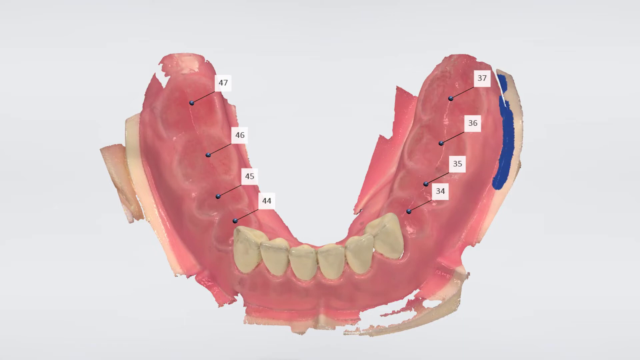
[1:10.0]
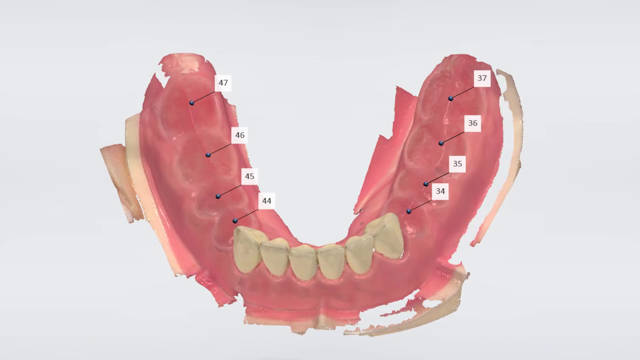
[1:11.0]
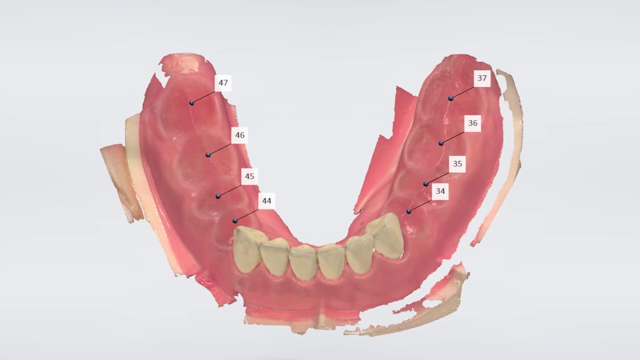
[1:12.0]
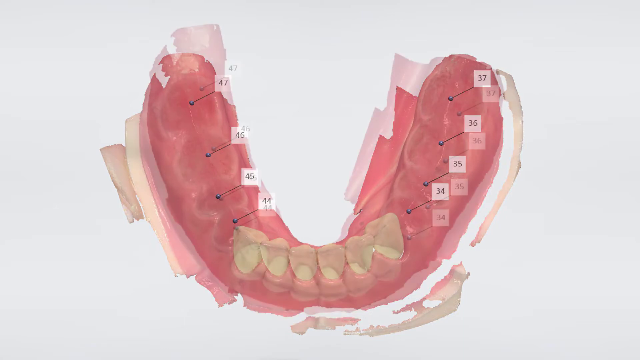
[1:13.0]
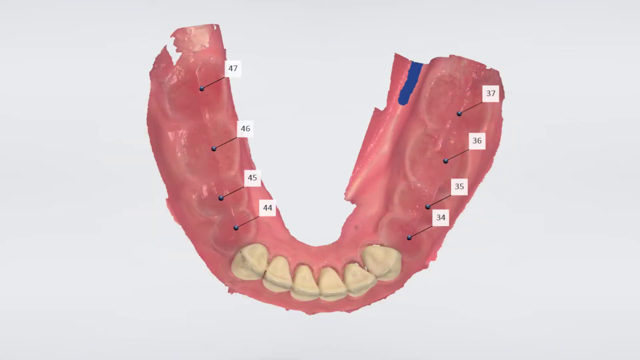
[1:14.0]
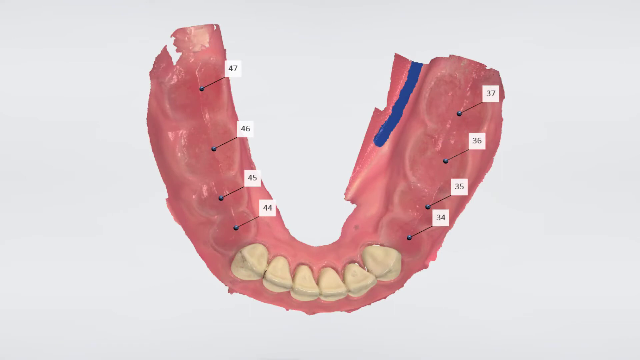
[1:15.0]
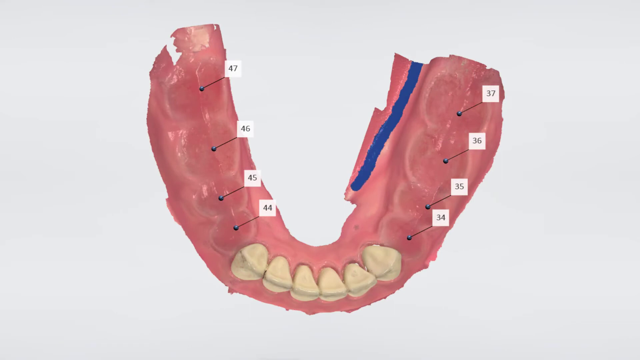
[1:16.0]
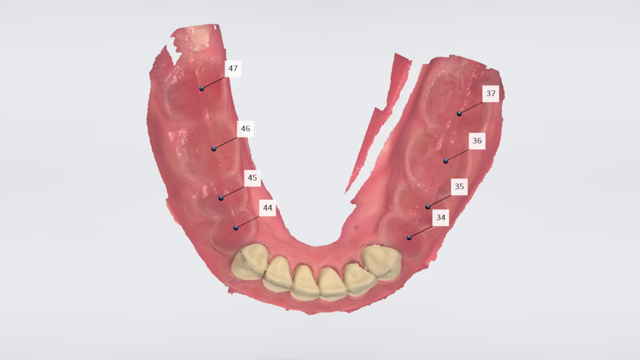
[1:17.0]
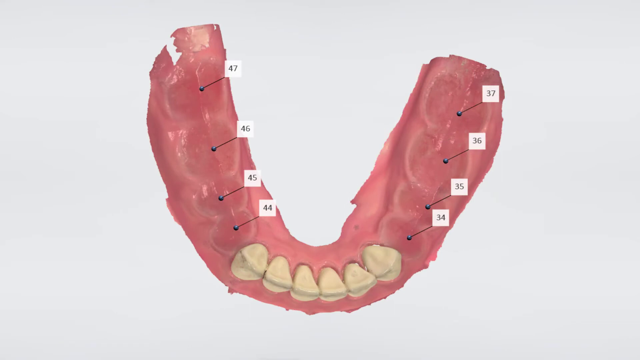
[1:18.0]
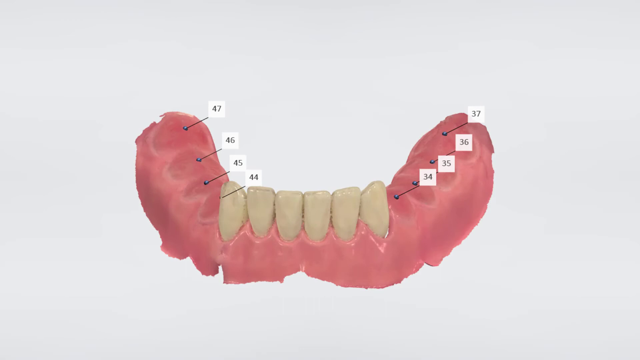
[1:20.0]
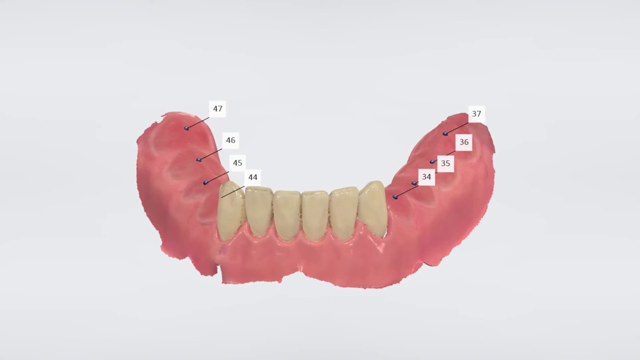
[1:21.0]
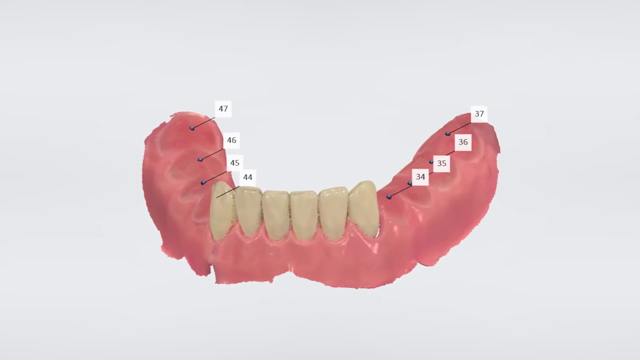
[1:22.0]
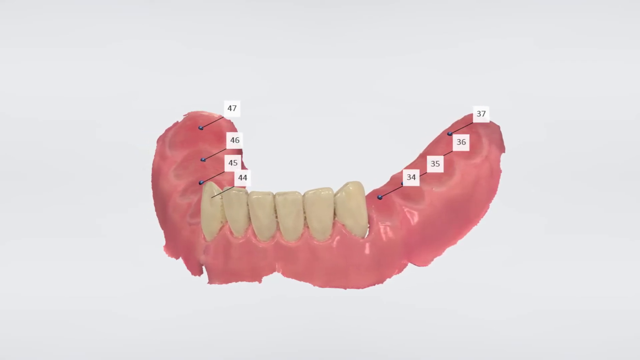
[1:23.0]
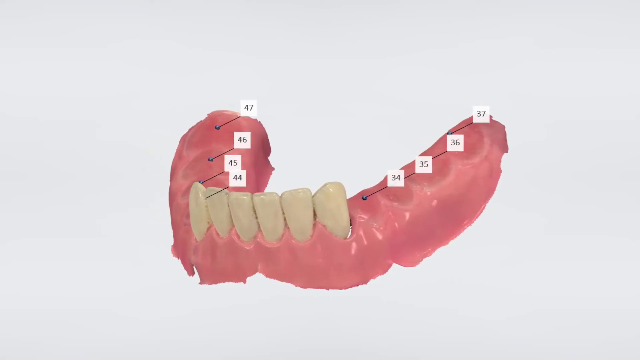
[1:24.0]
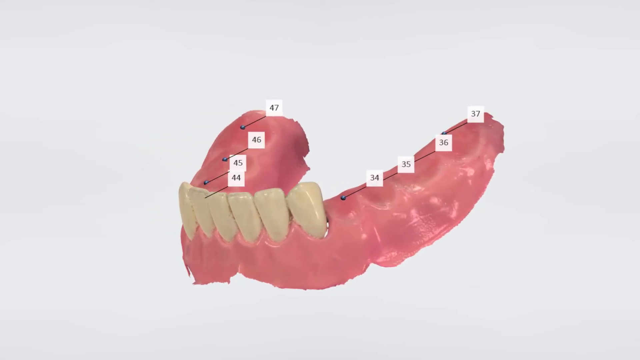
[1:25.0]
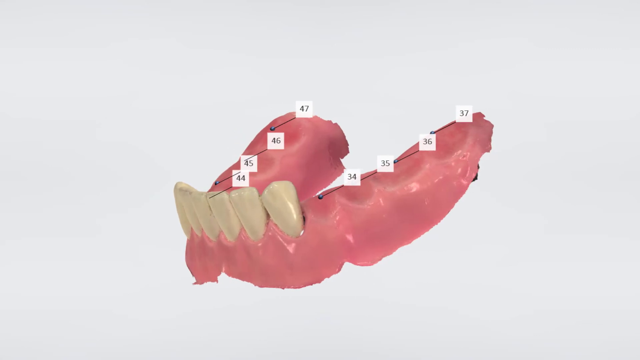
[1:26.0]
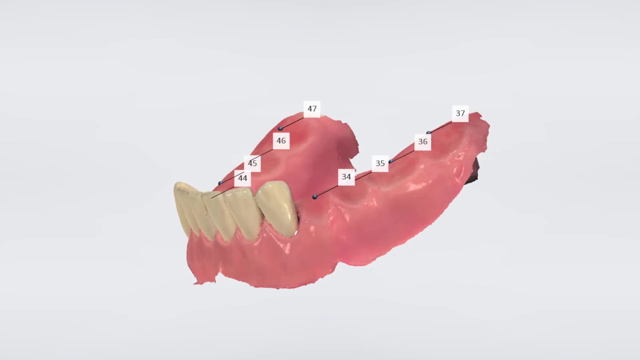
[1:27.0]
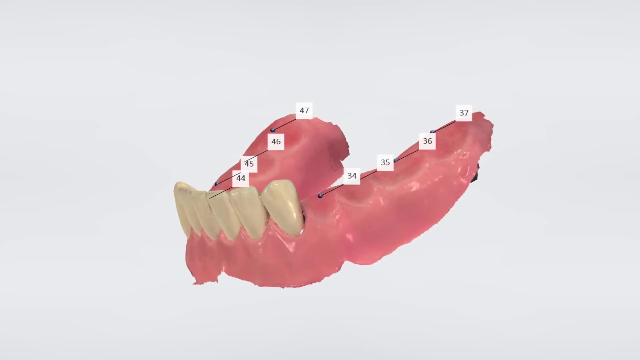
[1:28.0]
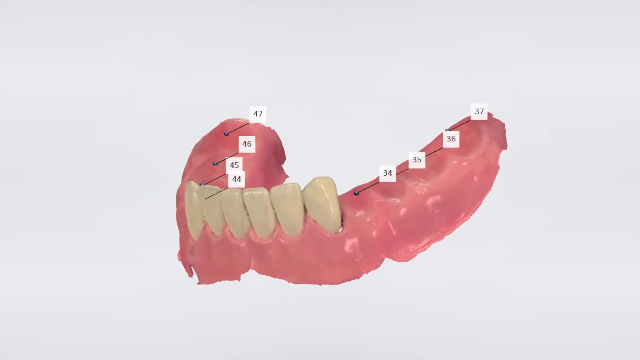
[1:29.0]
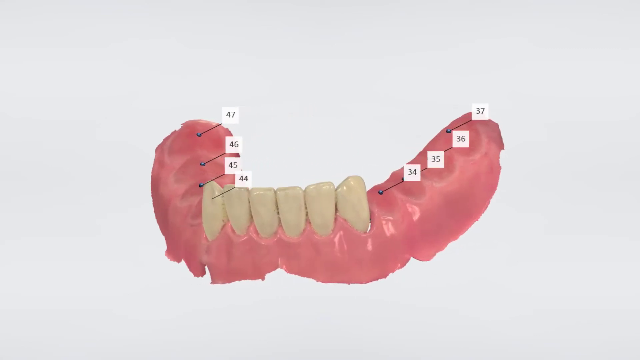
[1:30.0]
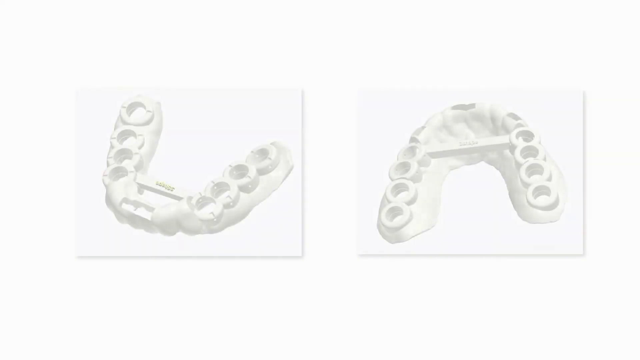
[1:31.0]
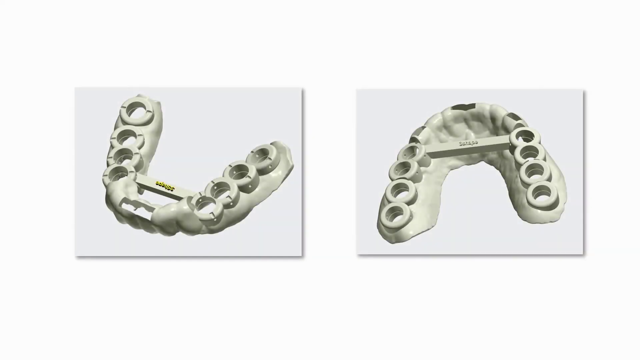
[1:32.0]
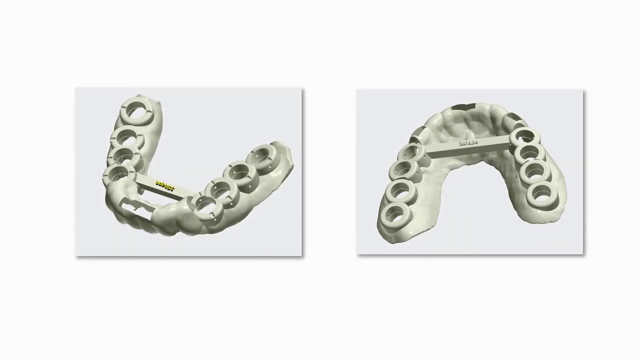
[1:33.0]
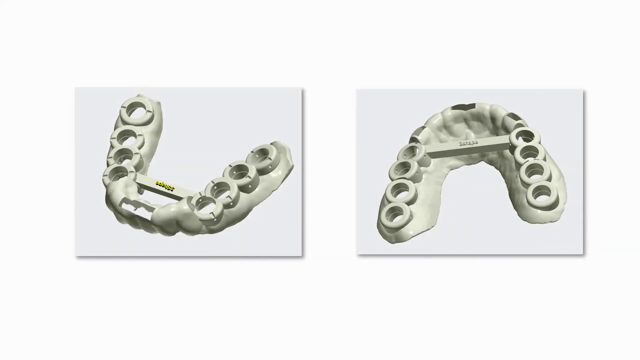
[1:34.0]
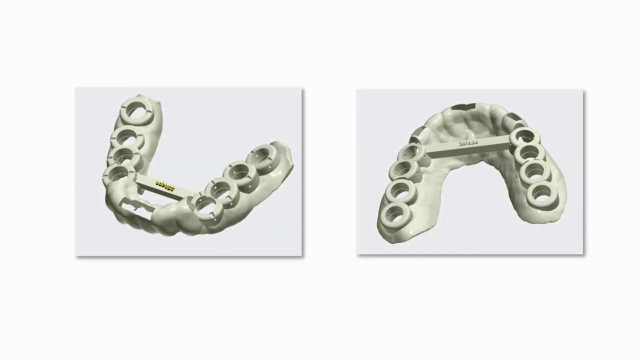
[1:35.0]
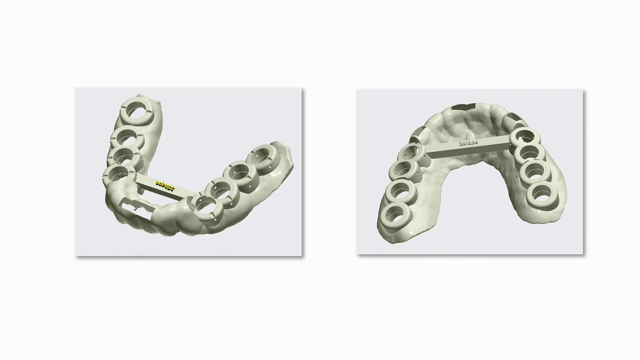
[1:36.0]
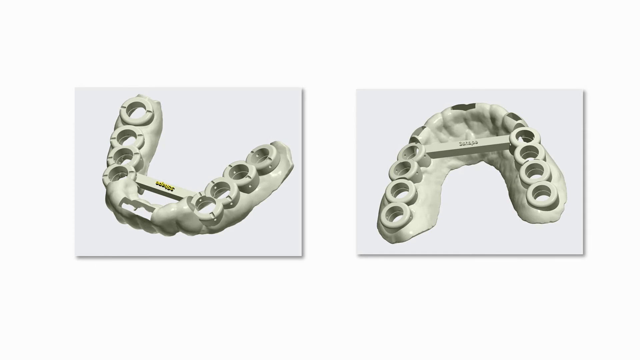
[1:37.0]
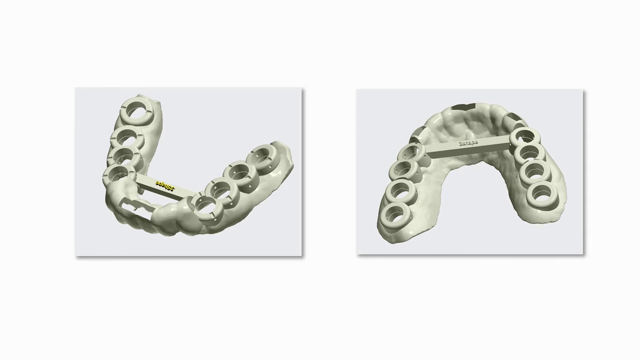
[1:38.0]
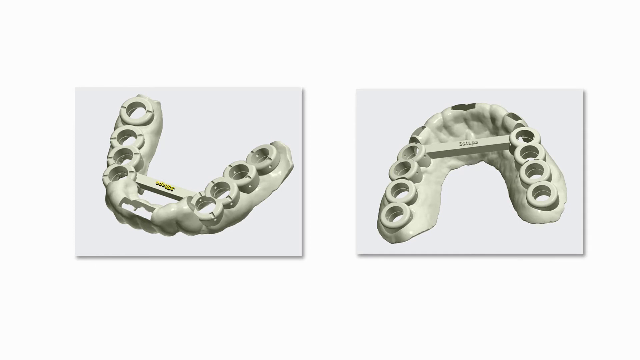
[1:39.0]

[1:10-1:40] The blue line continues down, and wherever it has been drawn the image is removed. It goes from the right side, follows the line of the gum round to the bottom middle, and continues up to the top left of the gum. The blue line then moves along the inside of the jaw on the other side of the holes, cutting down to leave a neater image of just the teeth and gum. Once this is complete, a front-side image shows the six front teeth, the gum, the holes where teeth should be, and the lines and squares. The image slowly rotates to the right to show the right side, slowly returns to the middle, and then turns to the left to show the left side. The image then disappears, replaced by two squares in the centre. The left square shows a white mould of this gum with circles where each of the holes are, and a bar that goes across the middle of the image. The right square shows the same thing from a different angle, with the circles for the vacant teeth closer to the viewer and the end where the teeth are present at the top of the image. These remain on screen.